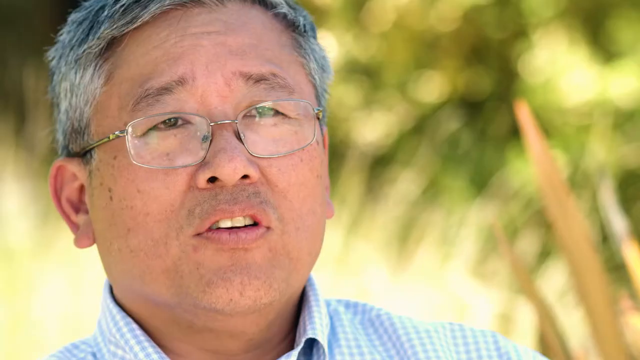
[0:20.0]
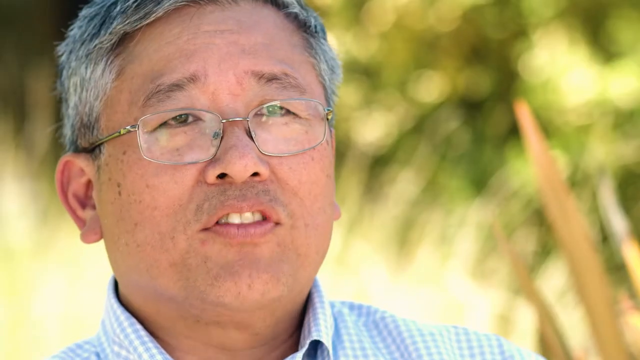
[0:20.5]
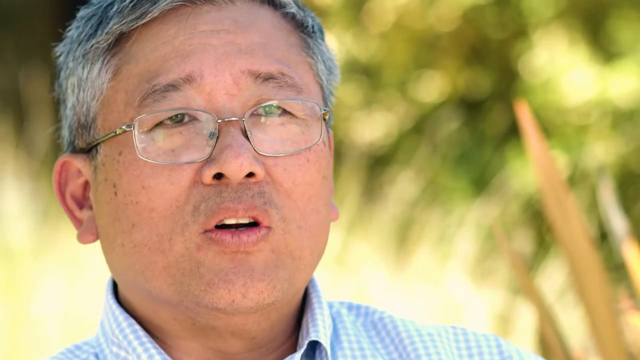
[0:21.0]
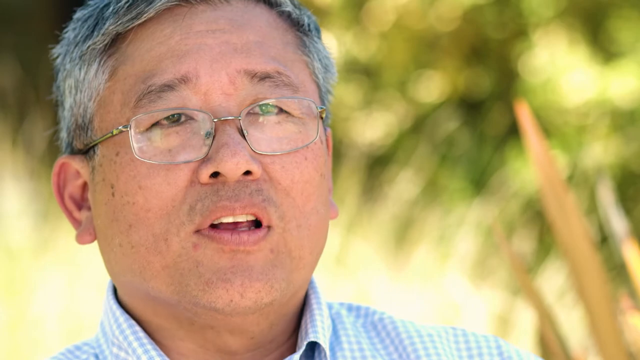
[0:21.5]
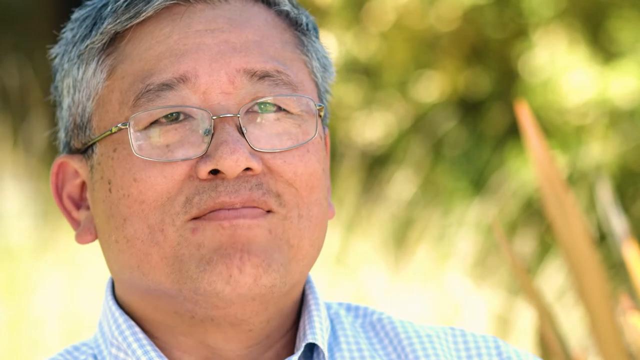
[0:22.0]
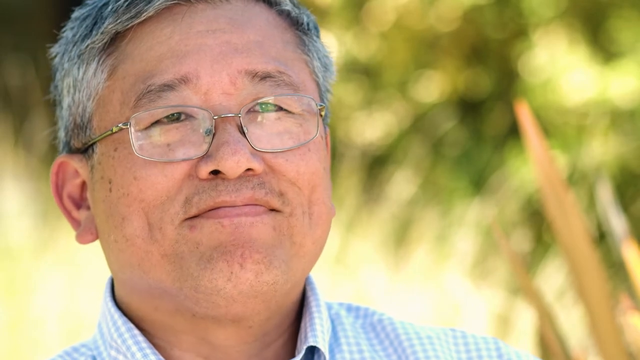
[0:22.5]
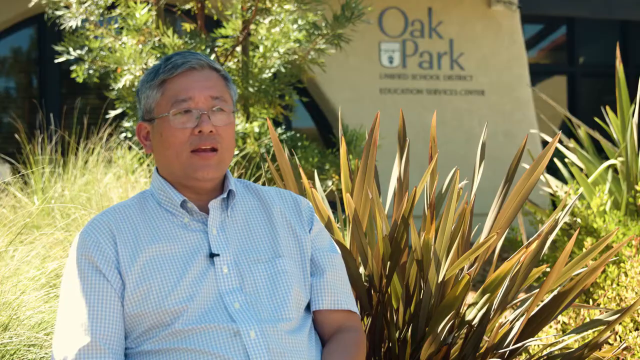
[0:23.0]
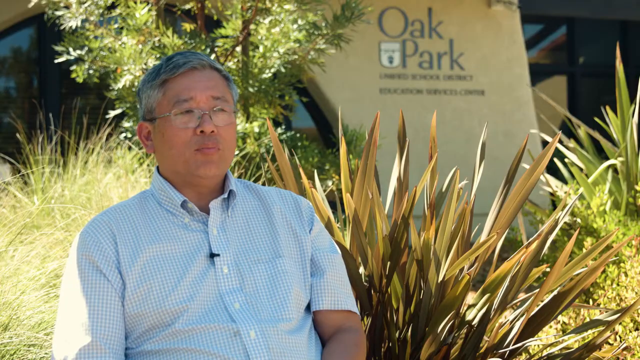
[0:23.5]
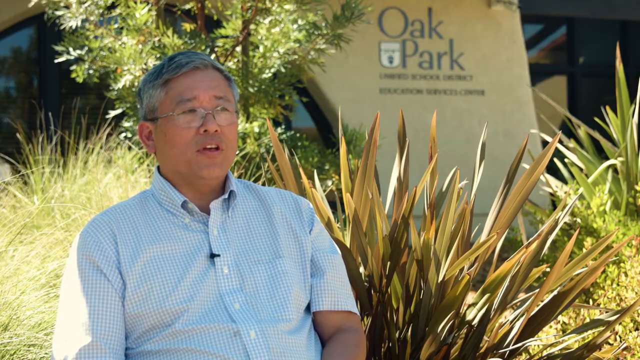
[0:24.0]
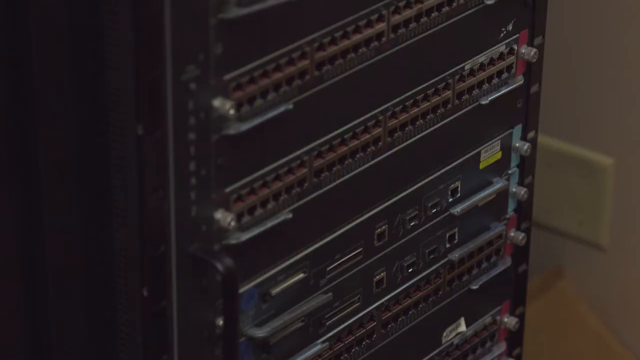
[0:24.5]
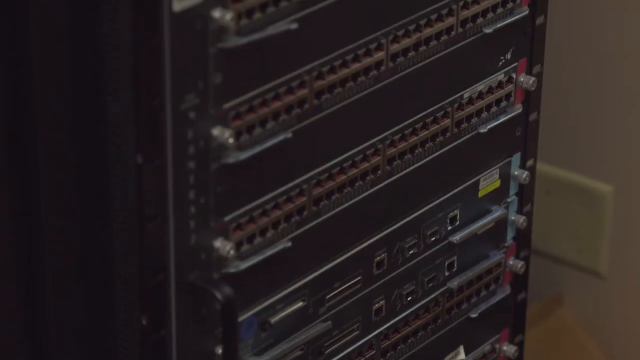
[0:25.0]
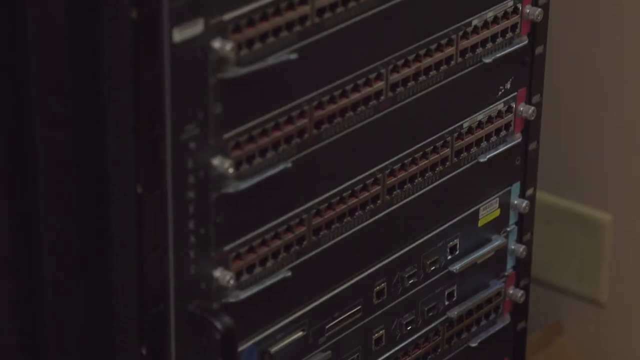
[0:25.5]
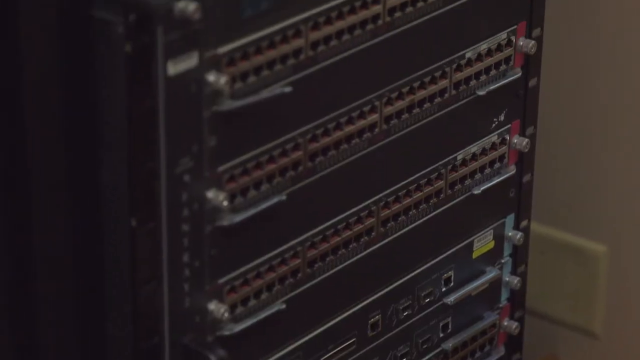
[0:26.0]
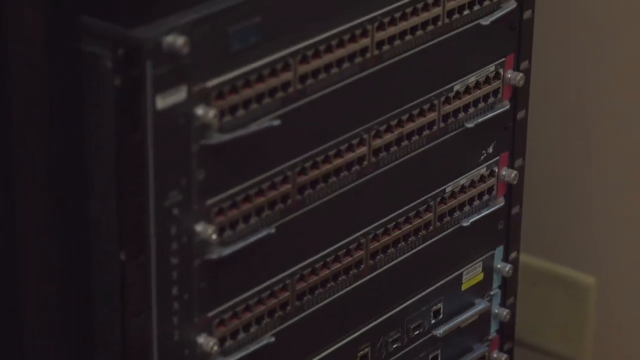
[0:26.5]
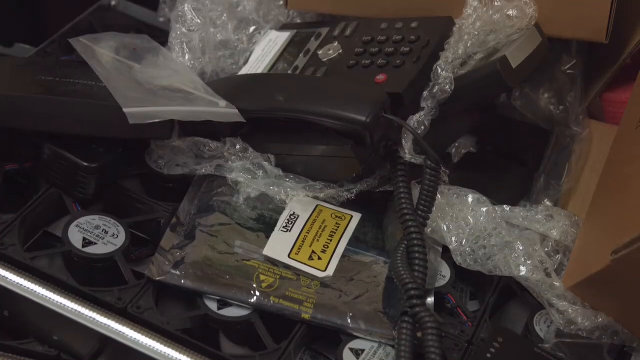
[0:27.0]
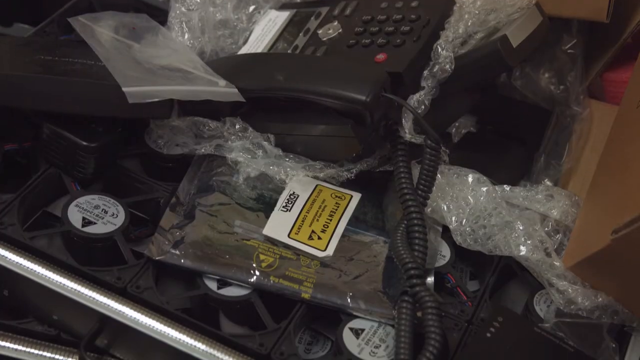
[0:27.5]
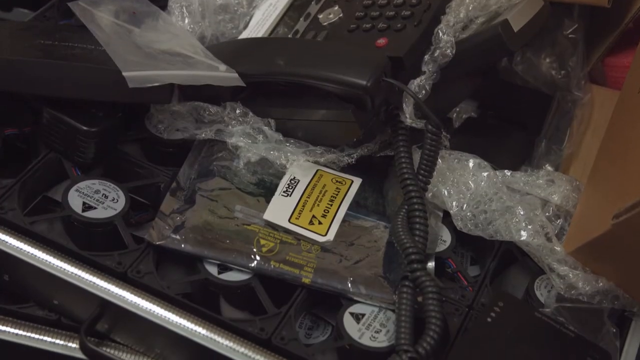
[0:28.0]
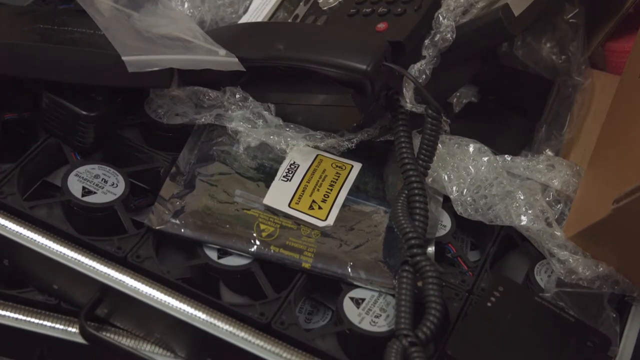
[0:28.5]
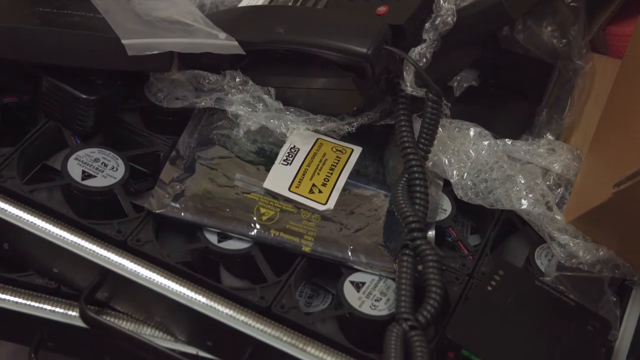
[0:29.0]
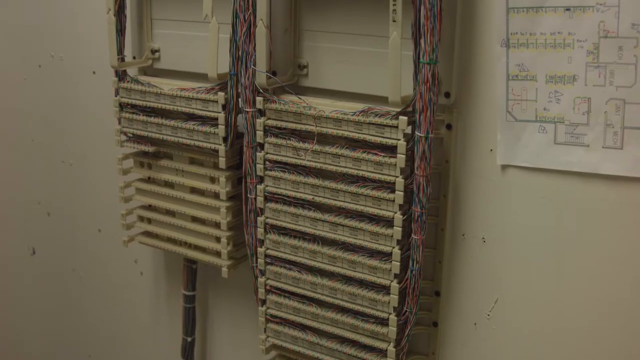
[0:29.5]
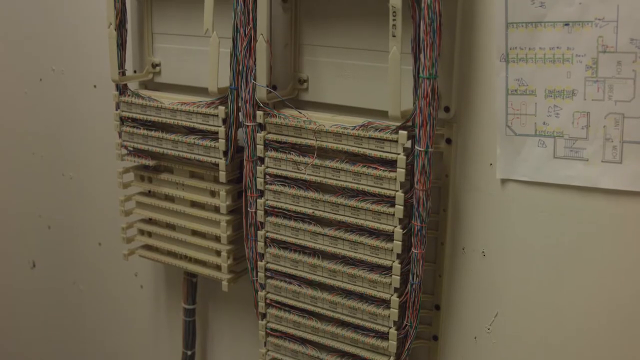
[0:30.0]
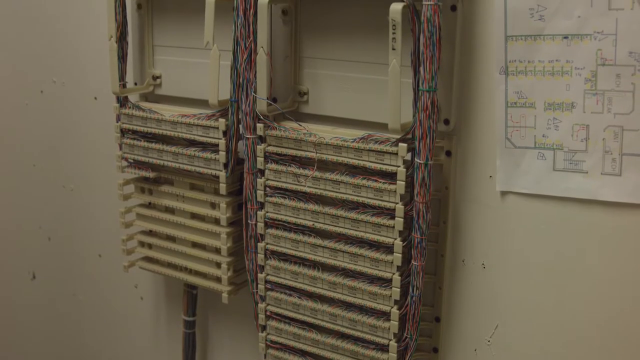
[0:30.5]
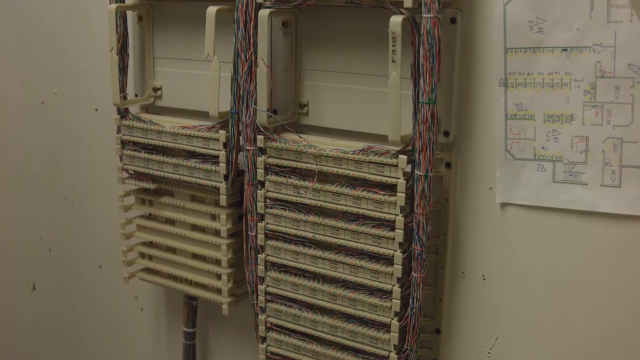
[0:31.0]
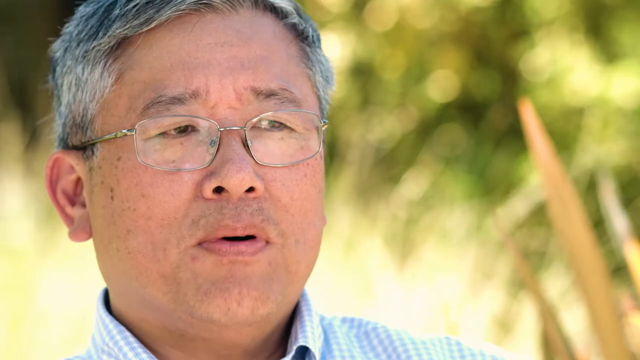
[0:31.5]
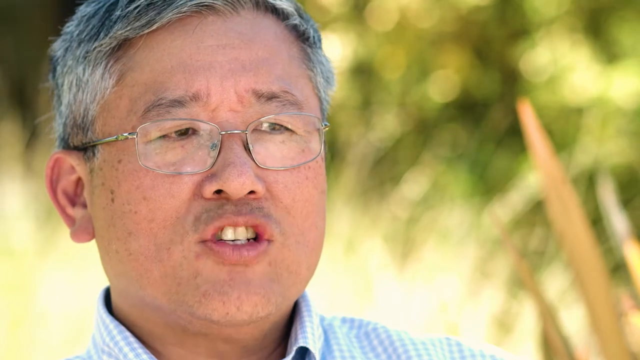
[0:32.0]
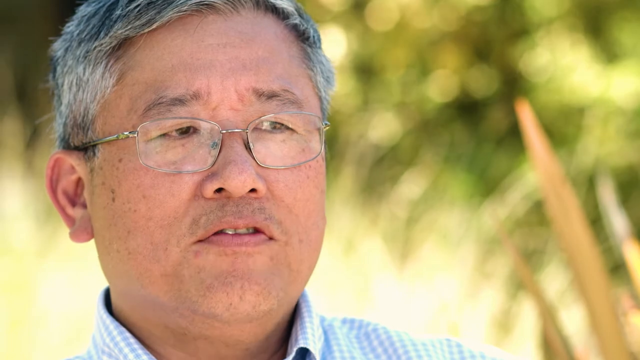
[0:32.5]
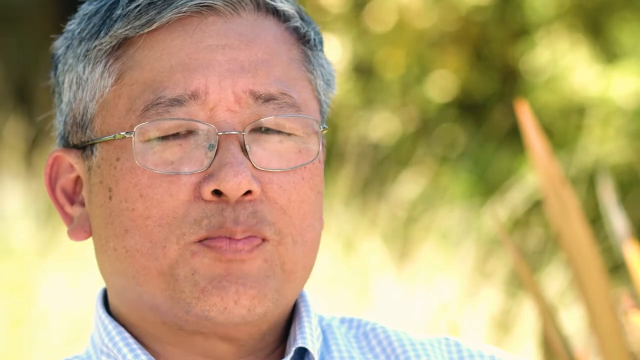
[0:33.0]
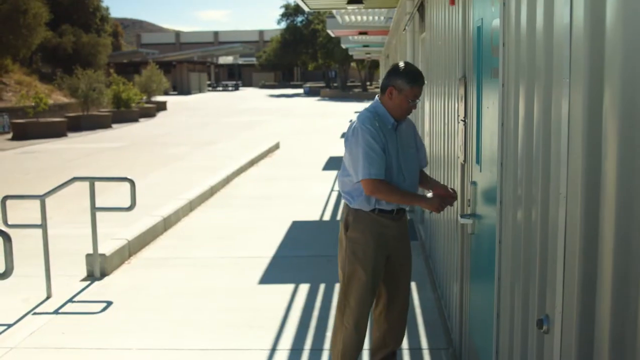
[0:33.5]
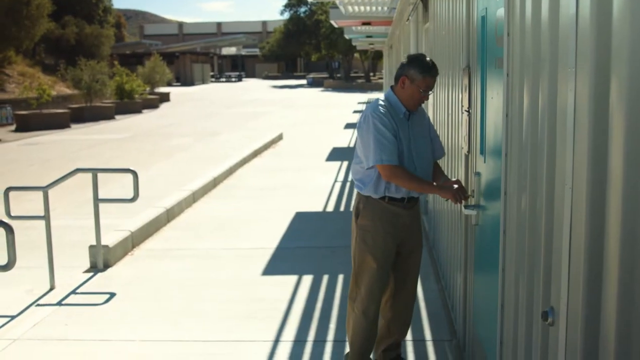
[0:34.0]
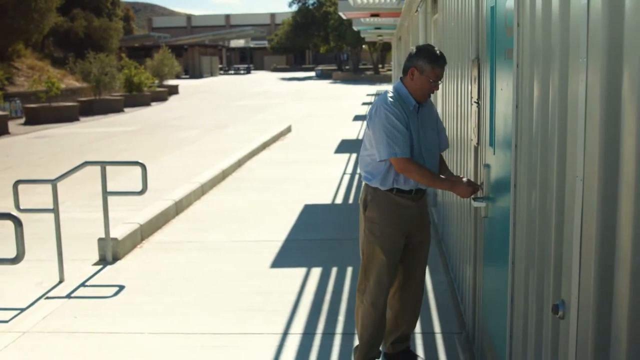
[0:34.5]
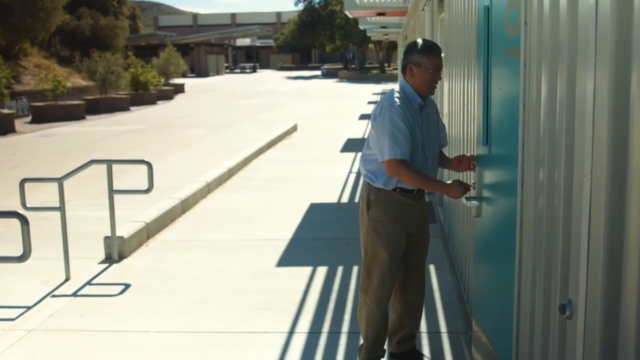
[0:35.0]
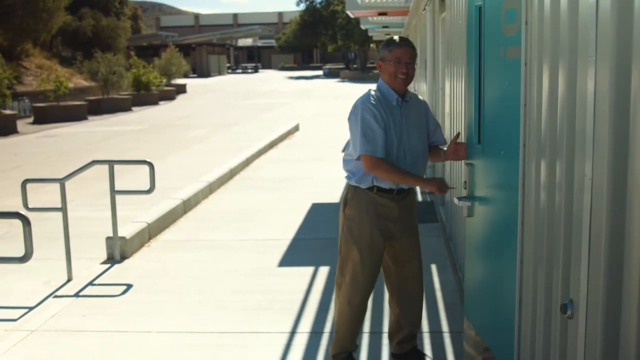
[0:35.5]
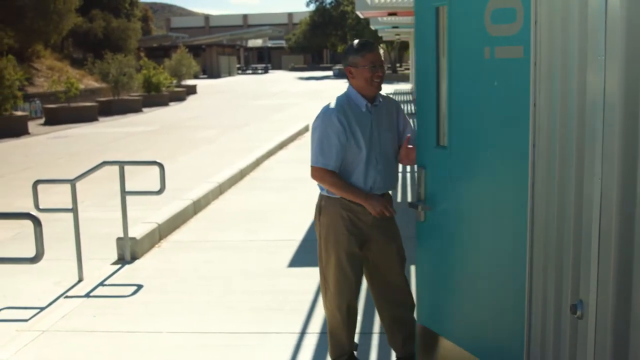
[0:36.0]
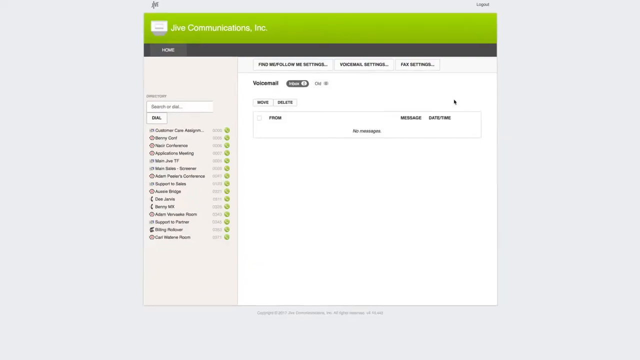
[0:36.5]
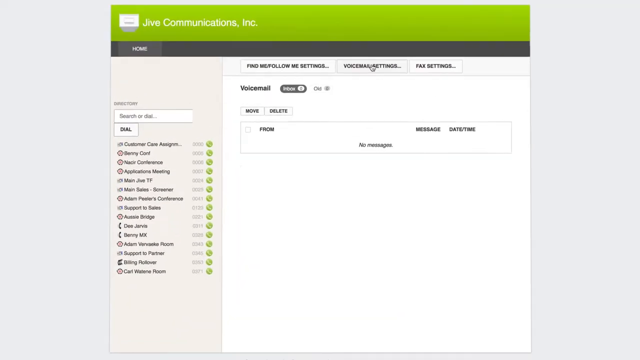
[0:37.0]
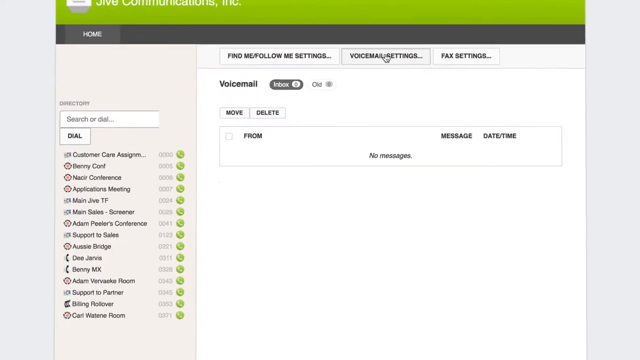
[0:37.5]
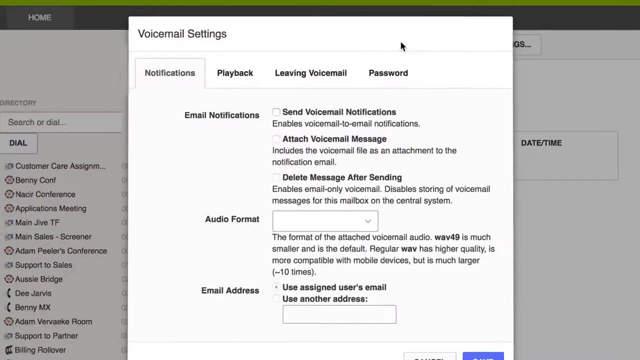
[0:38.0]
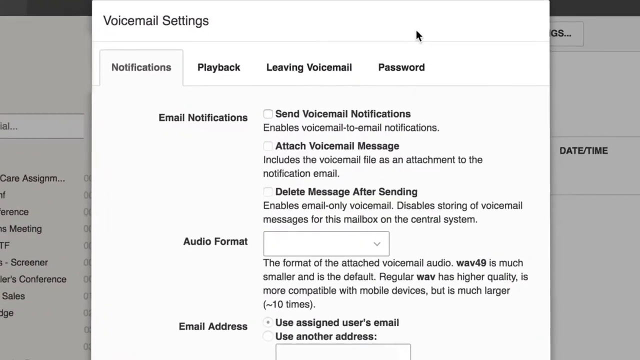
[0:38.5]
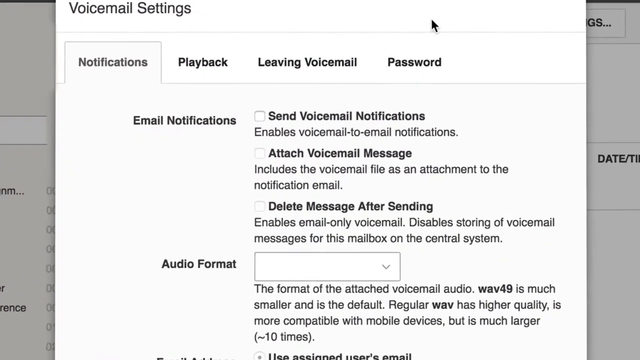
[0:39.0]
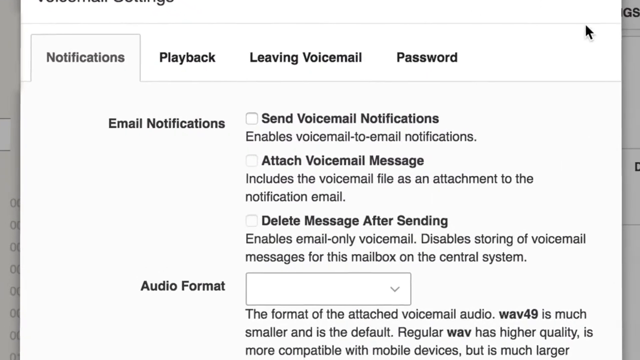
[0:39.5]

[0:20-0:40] A man talks to the camera. He is of Asian or maybe Native American appearance, with short grey hair, glasses and a blue and white striped shirt; nothing below his neck is visible. The background is kind of blurred, but he appears to be outdoors, with trees and maybe some tall grass behind him. He is smiling. A wider view shows him sitting down in a check blue shirt, with a number of trees behind him and, behind them, a building with the words "Oak Park" on it. Inside, there is just a phone on a desk with all sorts of other technical gear near it and lots of empty plastic, as if someone has opened a new package and left the plastic in and around the new phone. Cardboard boxes are to the right of it. To the right of that is some sort of map of a building, looking like one of those fire exit signs but lower quality.